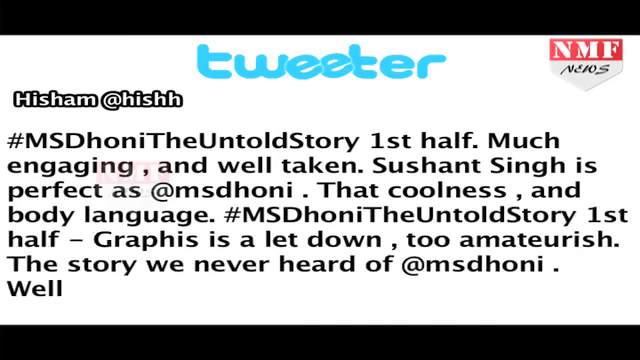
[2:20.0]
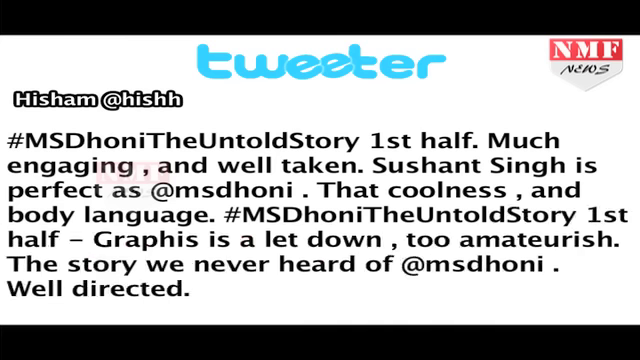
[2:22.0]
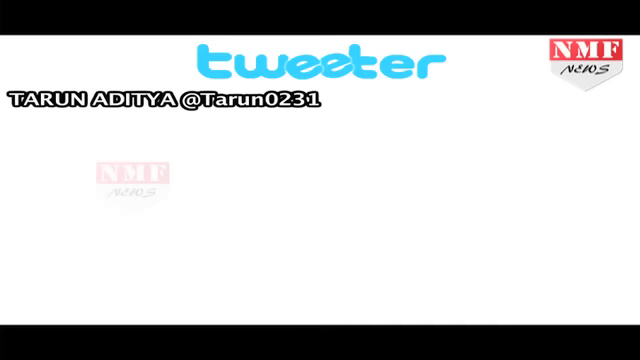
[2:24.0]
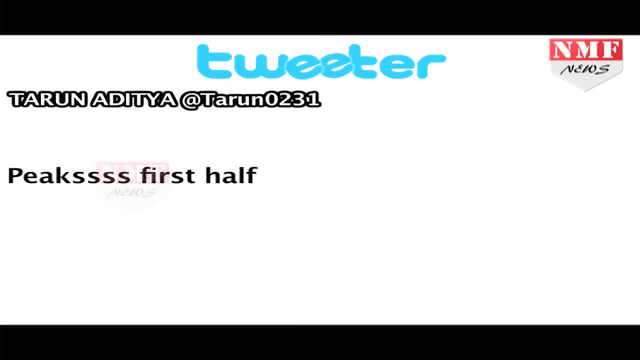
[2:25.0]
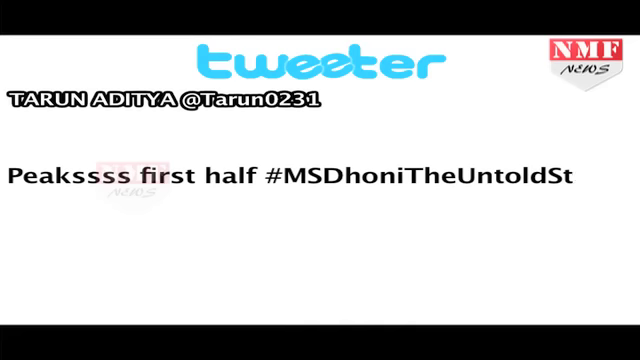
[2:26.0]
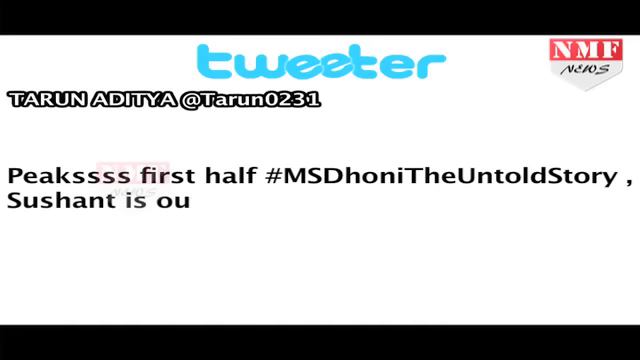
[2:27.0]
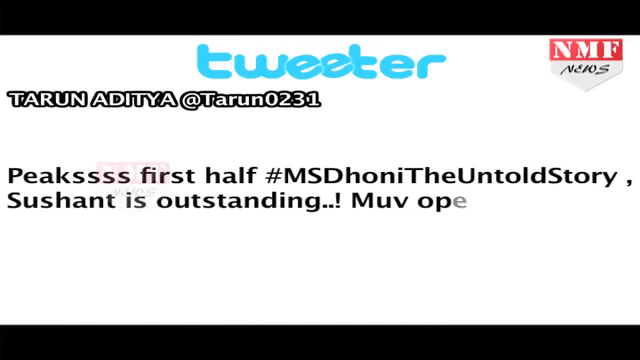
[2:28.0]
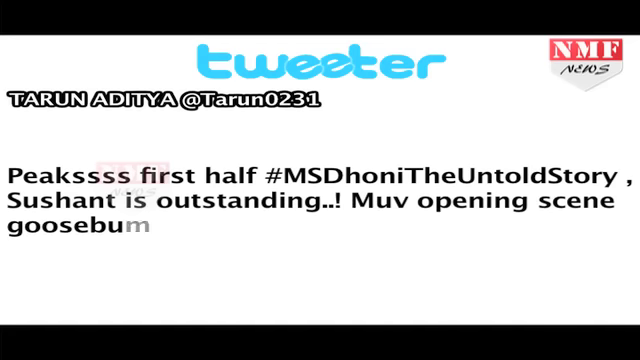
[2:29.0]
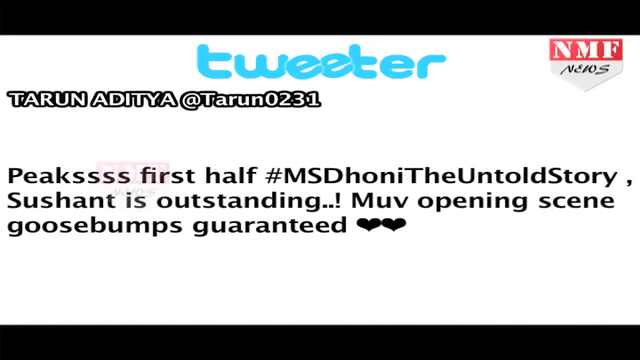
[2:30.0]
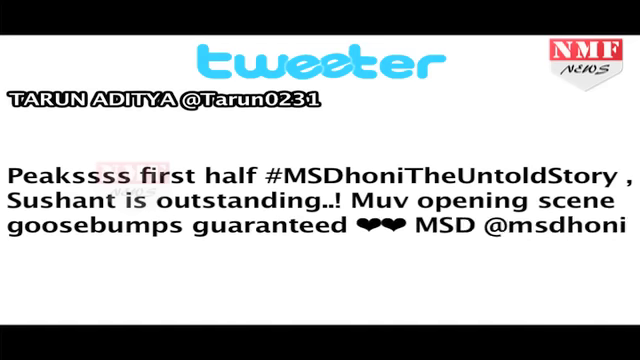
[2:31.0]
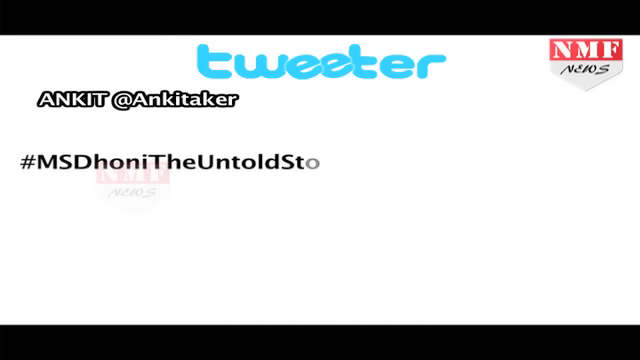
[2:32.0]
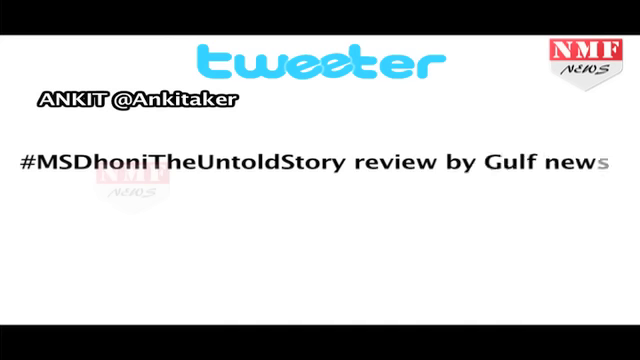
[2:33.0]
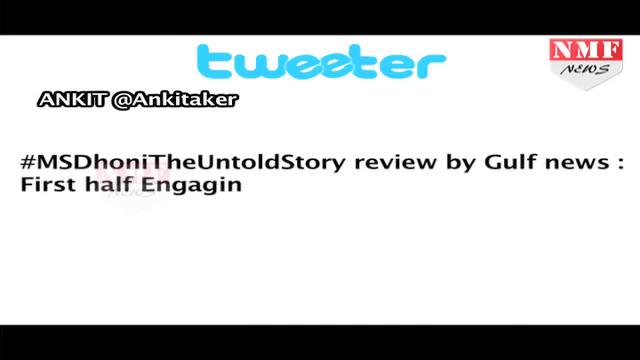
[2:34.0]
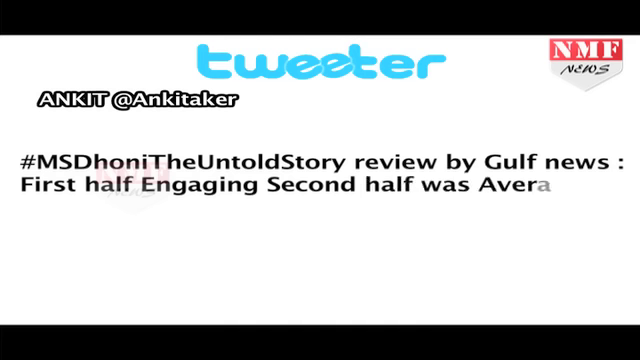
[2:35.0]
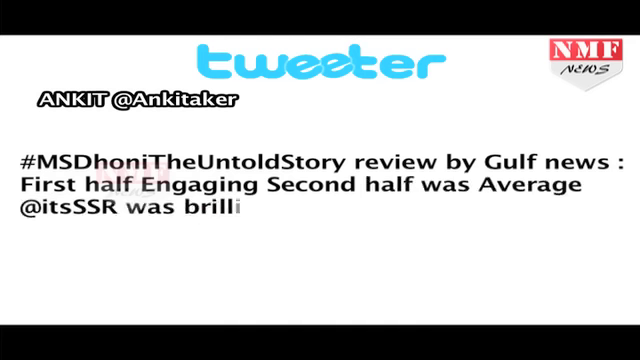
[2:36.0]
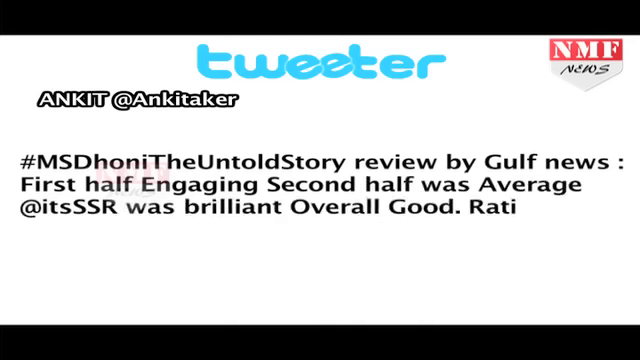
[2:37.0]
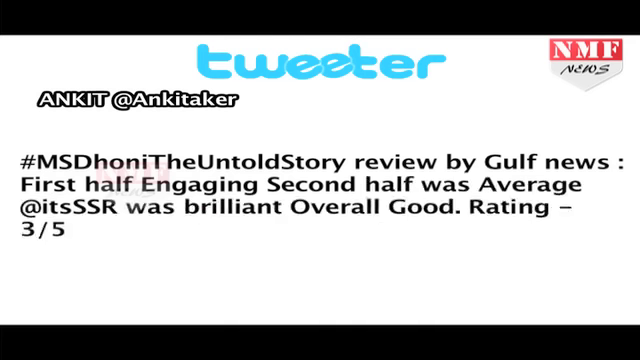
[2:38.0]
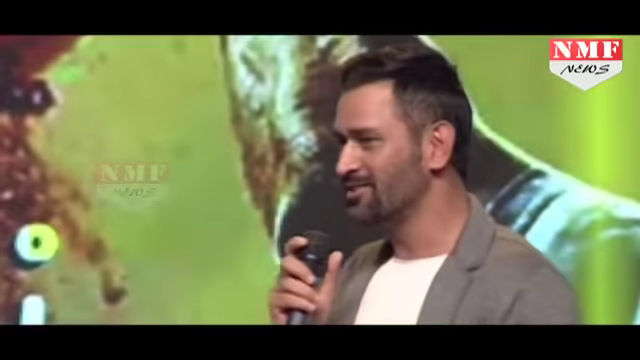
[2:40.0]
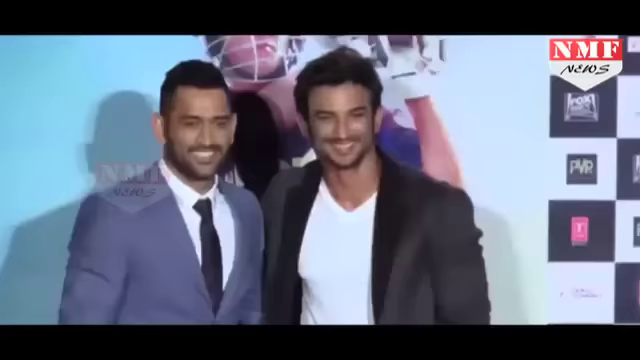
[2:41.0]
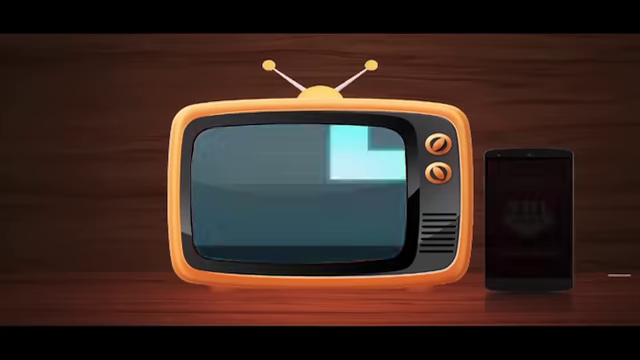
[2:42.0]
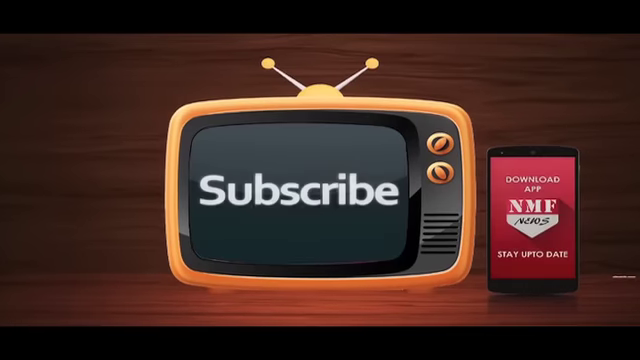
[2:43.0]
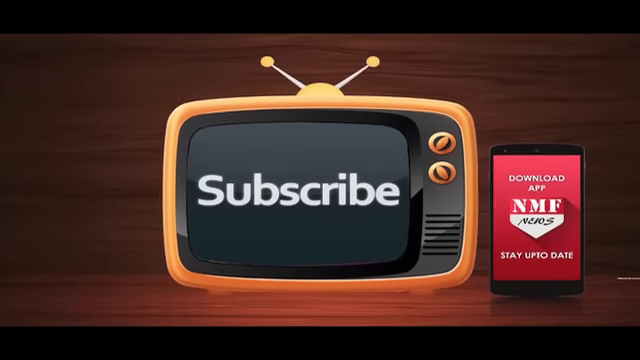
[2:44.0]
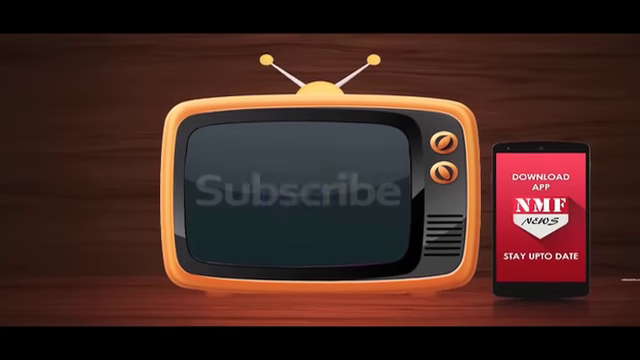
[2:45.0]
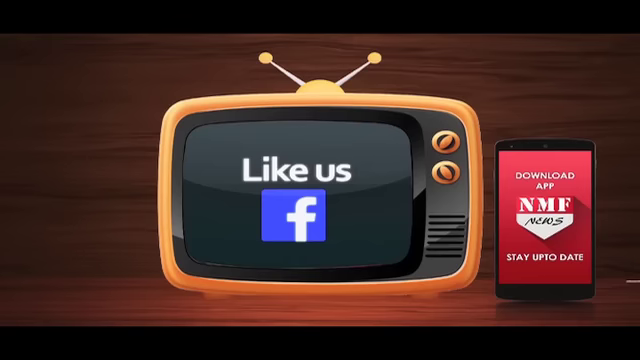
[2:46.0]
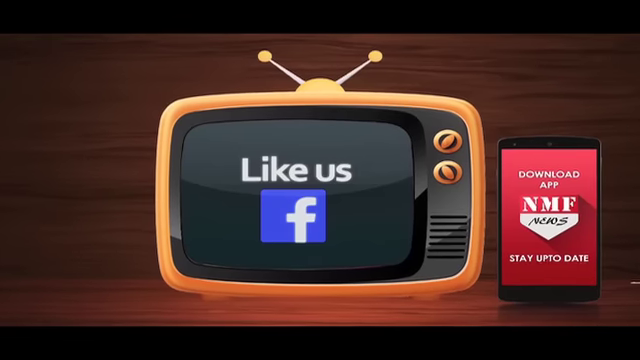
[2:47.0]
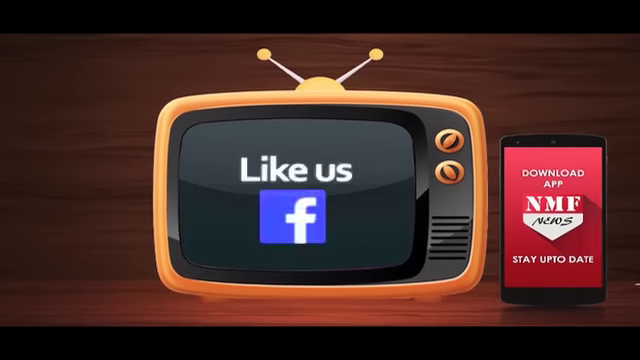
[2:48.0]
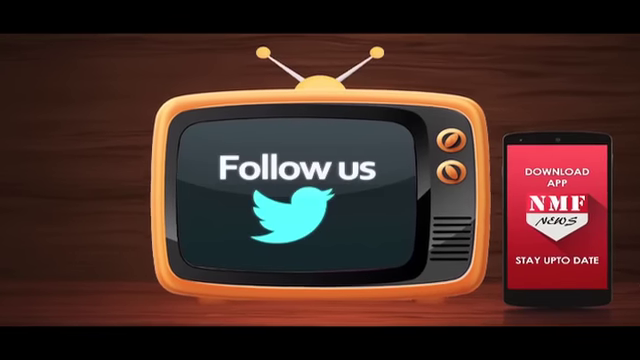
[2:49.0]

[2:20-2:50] More social media comments about the movie appear on Twitter, written in blue letters, on the NMF News Entertainment Channel. Many are good reviews; one says "first half engaging, second half was average", and one gives an overall good rating. The scene then moves to a press conference or perhaps the movie premiere, where the character and some of the other people from the movie stand up against the wall with the movie trailer poster and pose for the cameras as flashes go off. At the end, a small orange retro TV appears on a wooden plank background, with a little red message beside it reading "download app NMF News, stay up to date". The orange TV screen shows "subscribe", "like us on Facebook" and "like us on Twitter".